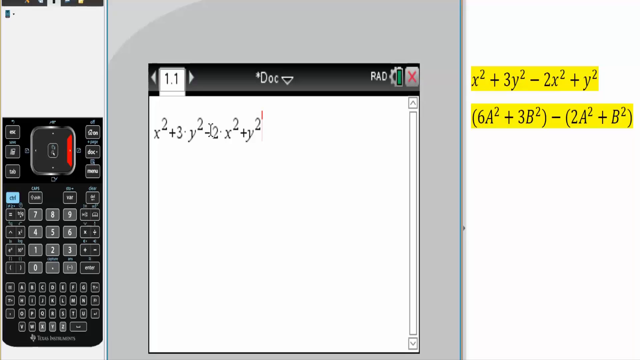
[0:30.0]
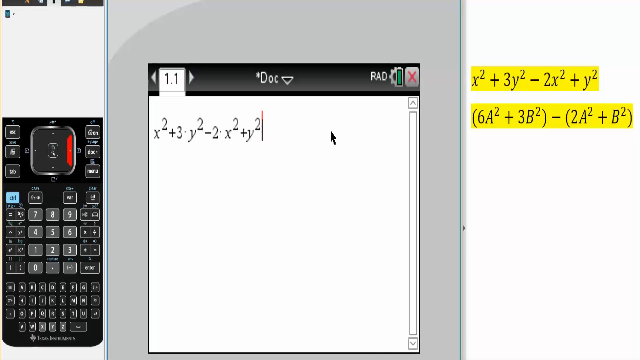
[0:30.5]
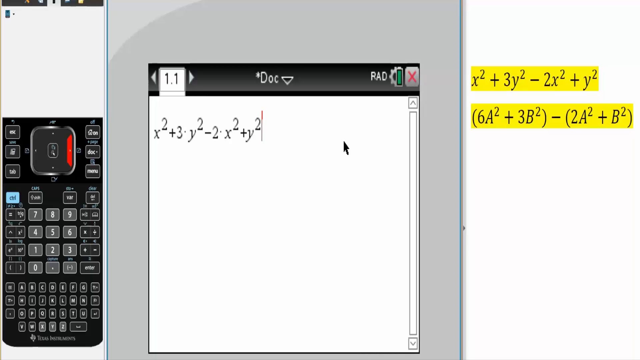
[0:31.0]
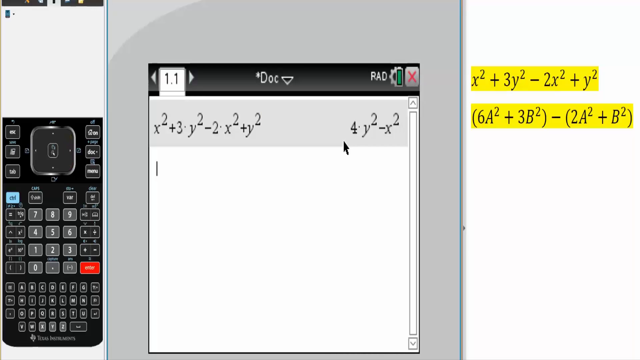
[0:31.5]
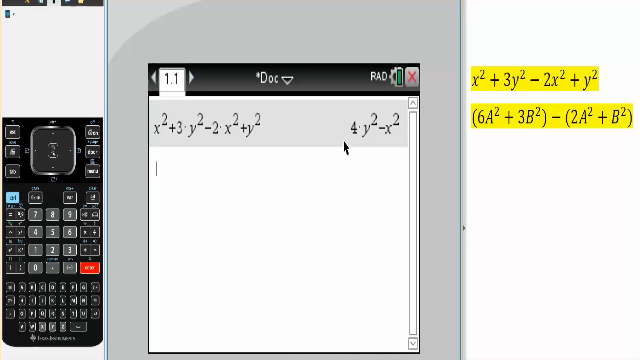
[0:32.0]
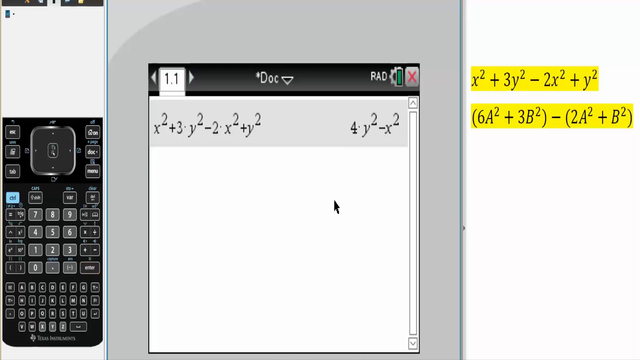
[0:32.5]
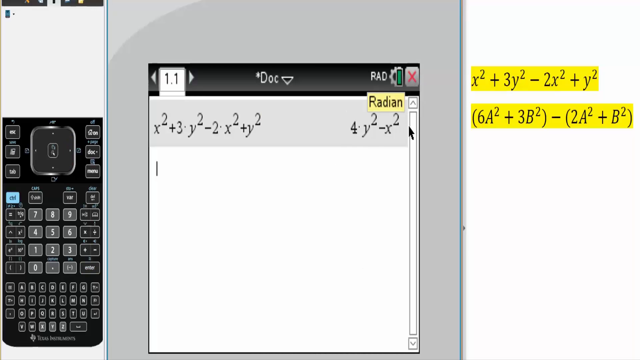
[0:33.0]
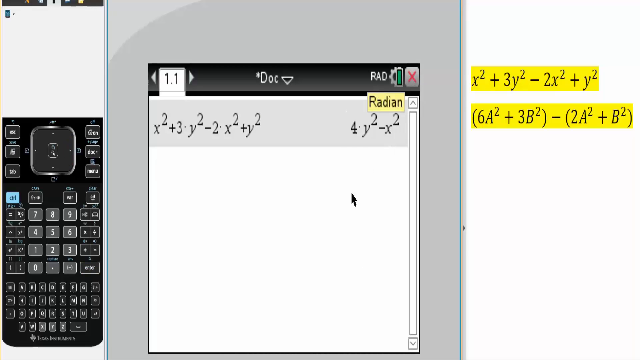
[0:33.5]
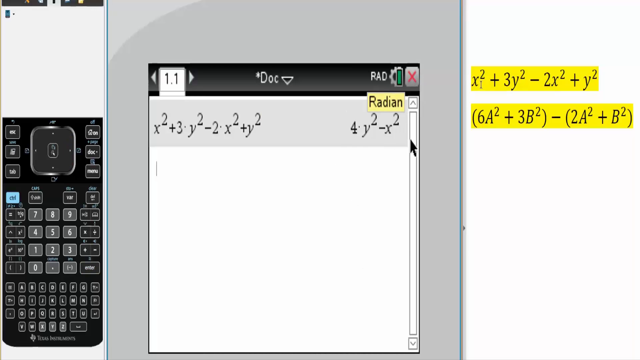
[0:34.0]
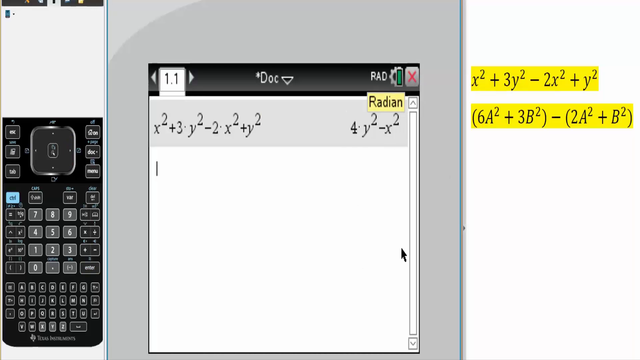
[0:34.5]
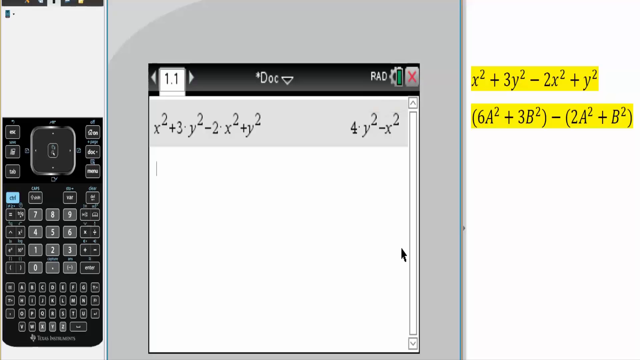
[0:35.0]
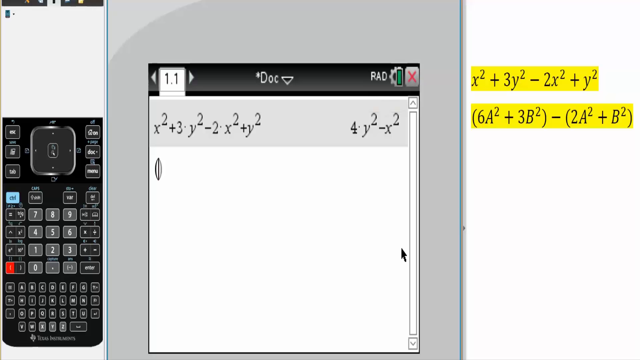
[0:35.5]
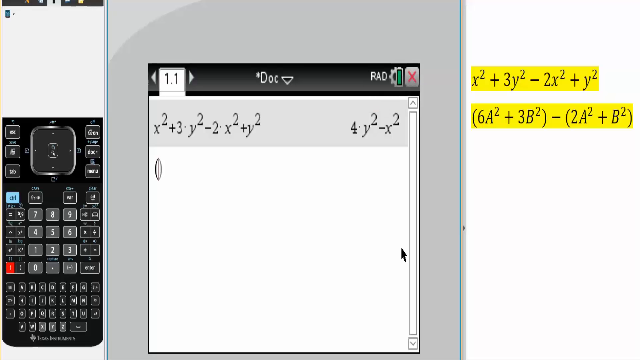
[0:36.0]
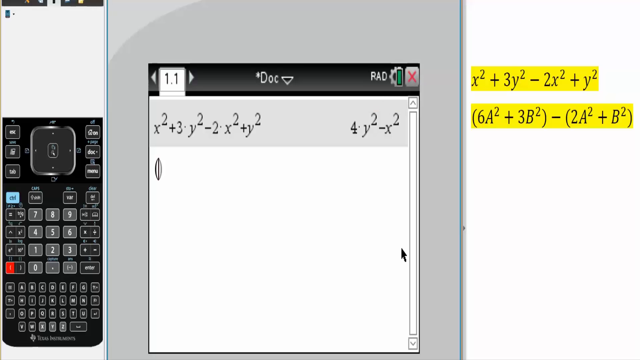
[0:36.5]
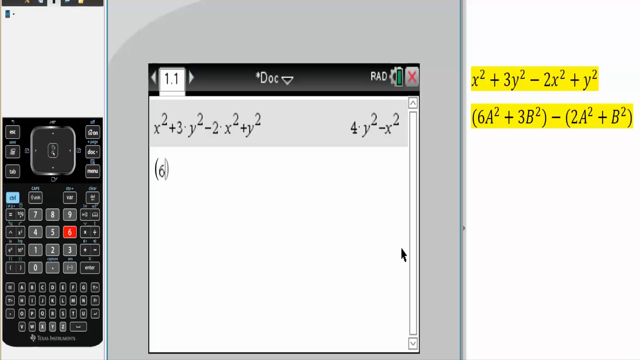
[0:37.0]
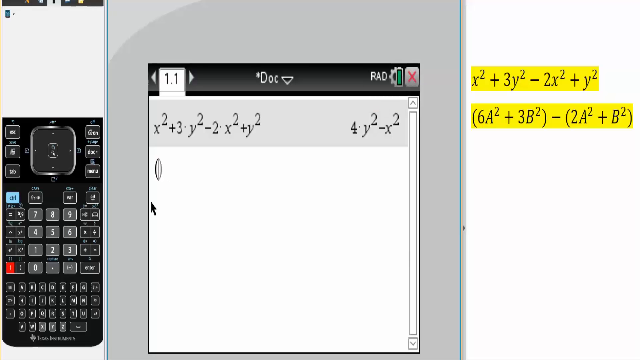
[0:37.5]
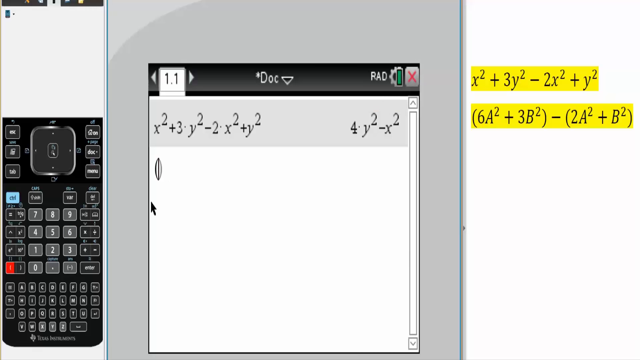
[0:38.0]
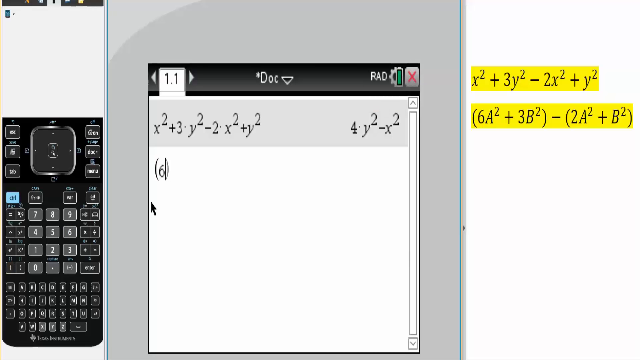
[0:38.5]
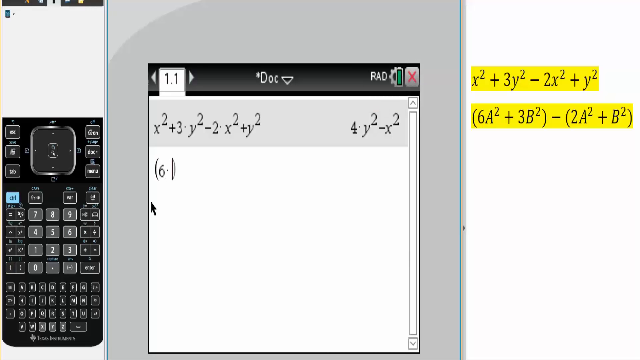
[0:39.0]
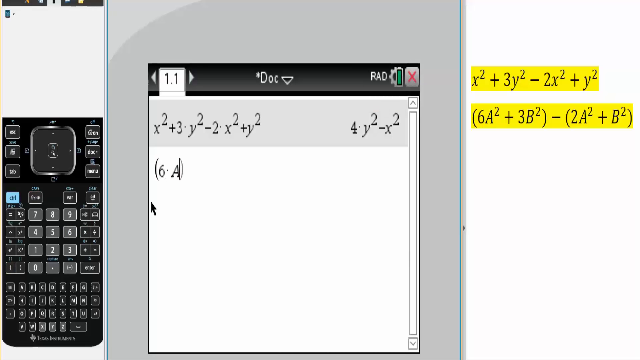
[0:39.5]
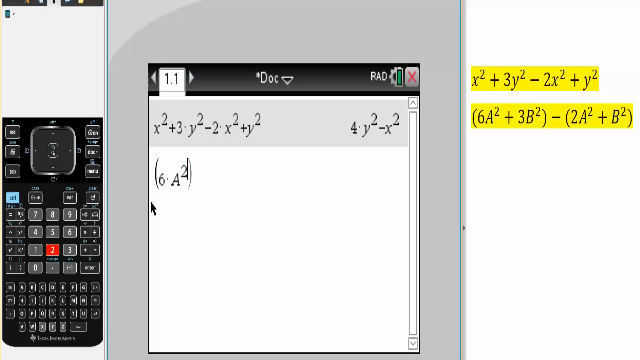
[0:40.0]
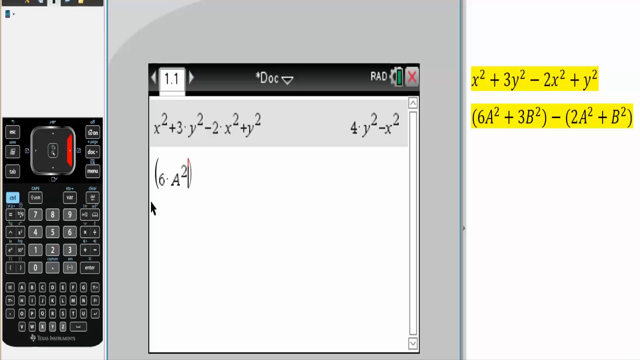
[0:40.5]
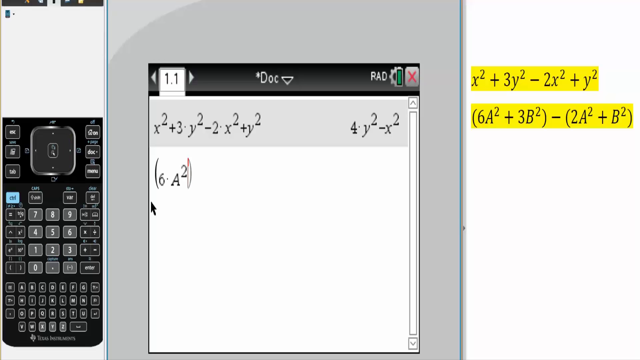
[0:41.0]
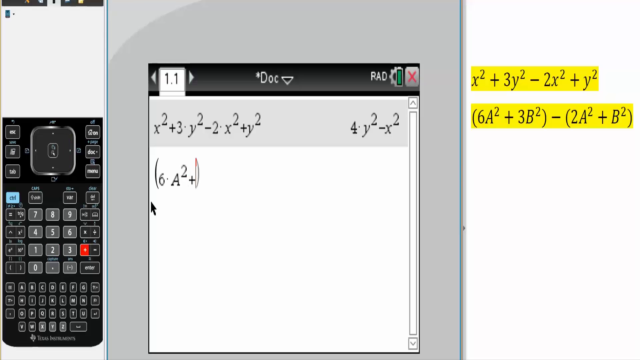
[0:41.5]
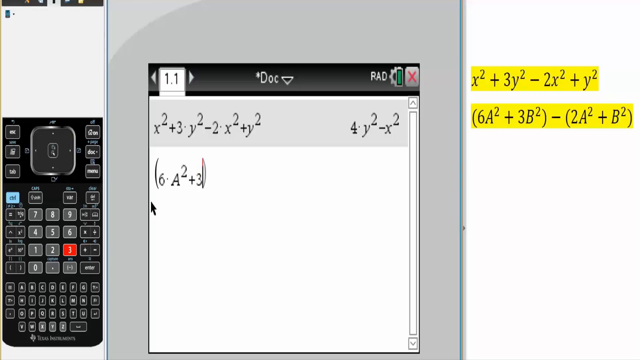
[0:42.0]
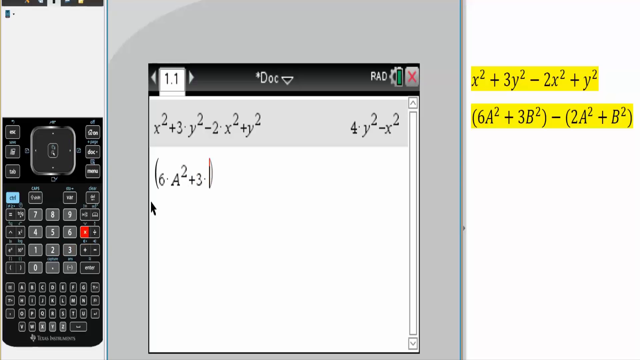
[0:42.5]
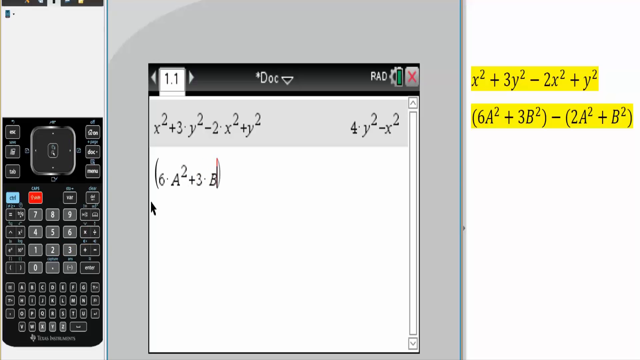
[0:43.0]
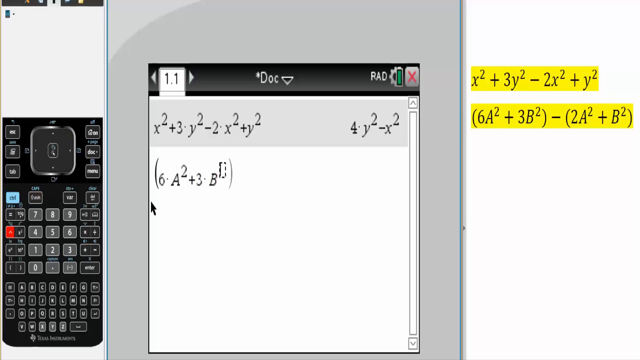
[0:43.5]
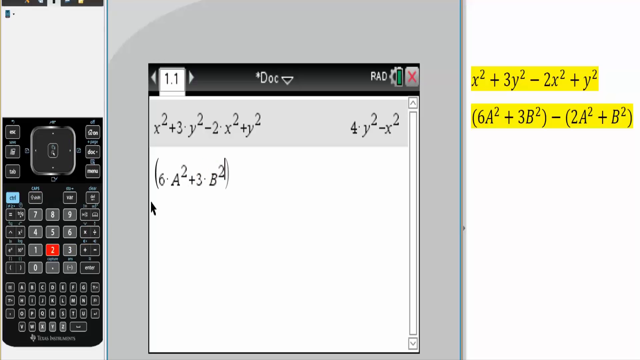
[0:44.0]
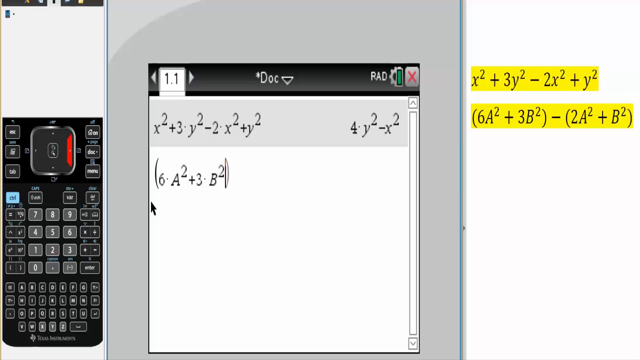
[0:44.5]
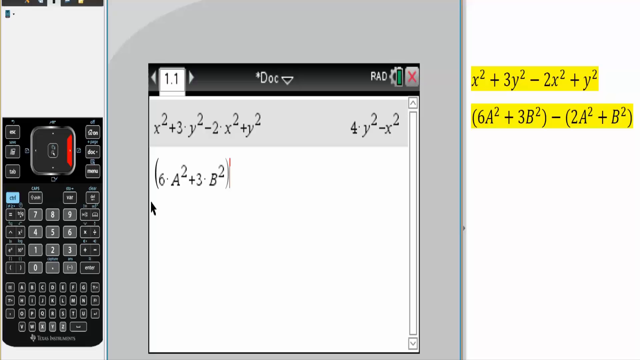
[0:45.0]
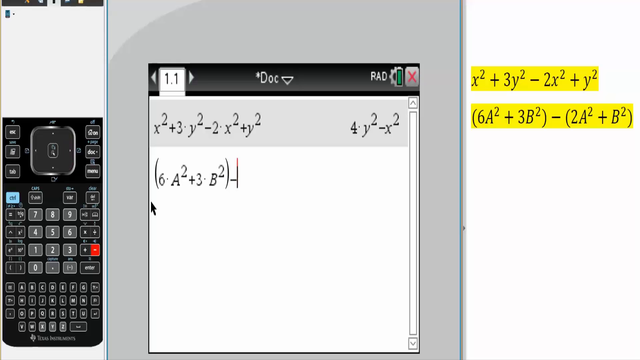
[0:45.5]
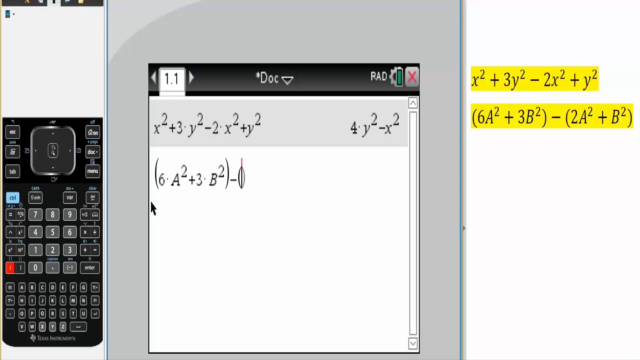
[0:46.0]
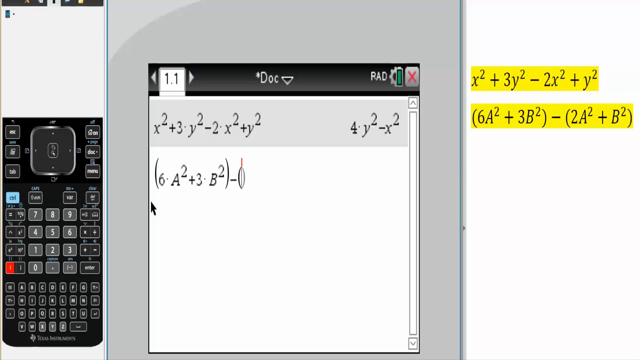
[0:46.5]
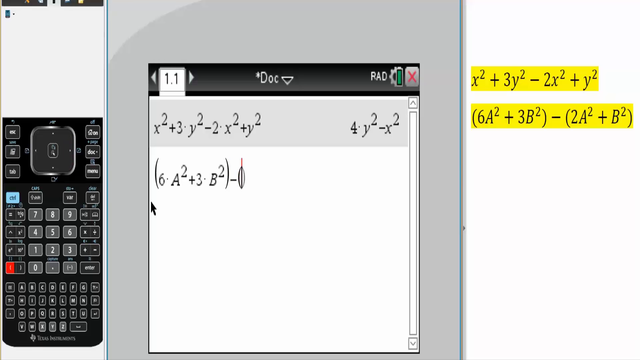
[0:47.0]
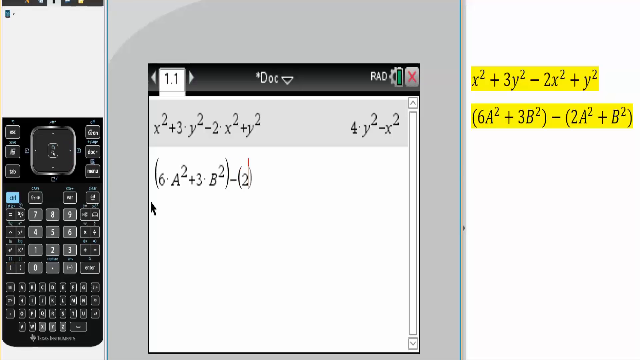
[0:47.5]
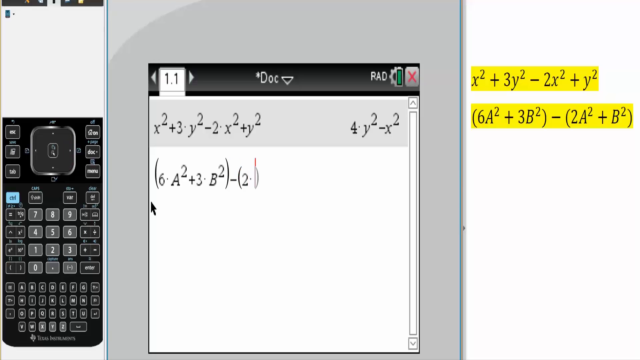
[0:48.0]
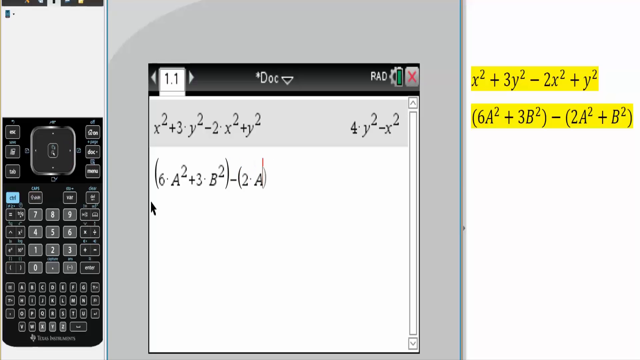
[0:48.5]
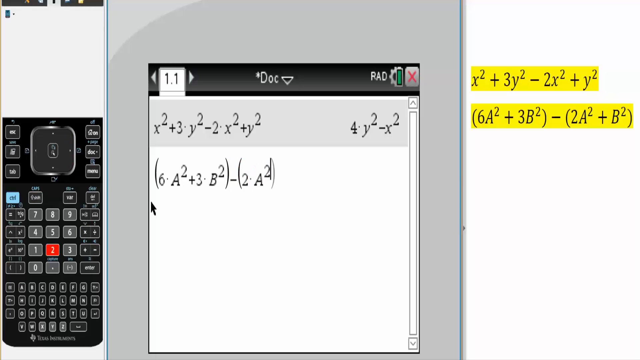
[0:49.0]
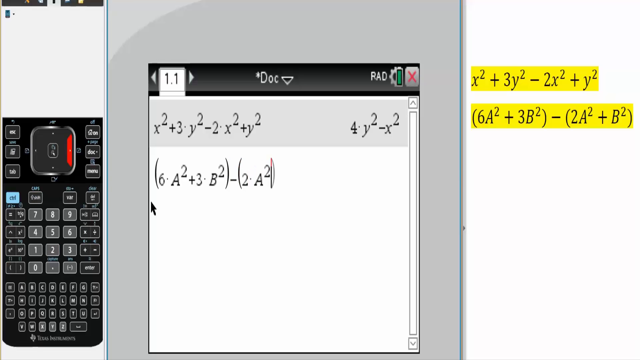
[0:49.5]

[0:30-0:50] Two maths problems are shown. A math problem is being worked on on what appears to be a smartphone screen, and the individual appears to be simplifying the problems with the smartphone or calculator. On the right side of the screen, two problems are written on a different surface that appears to be a board or white paper. The person appears to be showing viewers how to solve the math problem using the smart device. On the left side, where the smart device or calculator is visible, a glow appears over the buttons to show which ones are being pressed. The person appears to be making content for a class or for YouTube to teach others how to solve the problems.